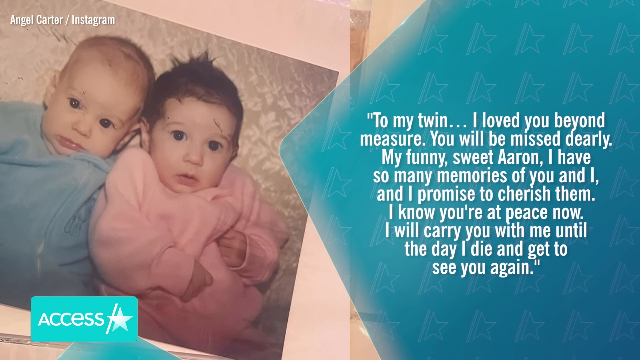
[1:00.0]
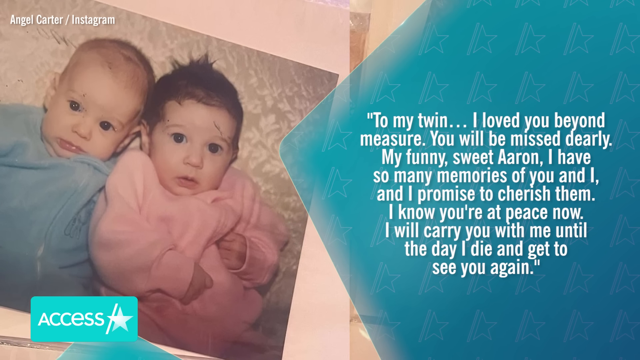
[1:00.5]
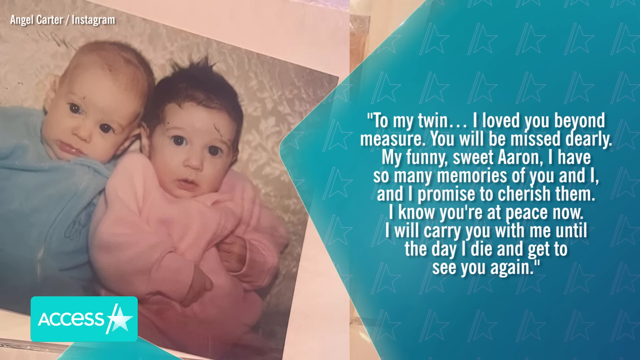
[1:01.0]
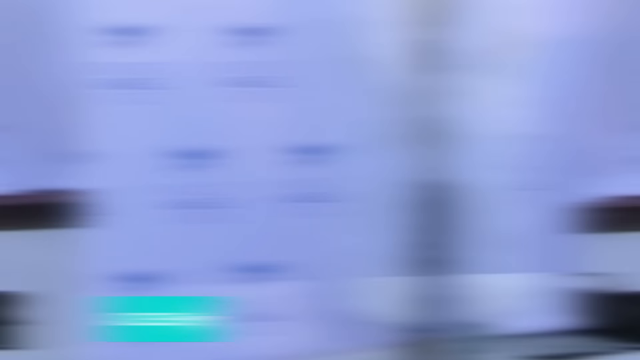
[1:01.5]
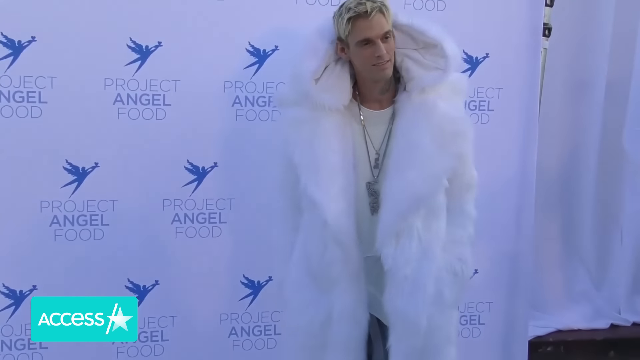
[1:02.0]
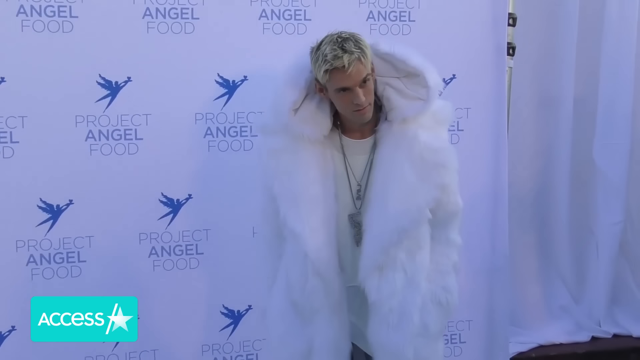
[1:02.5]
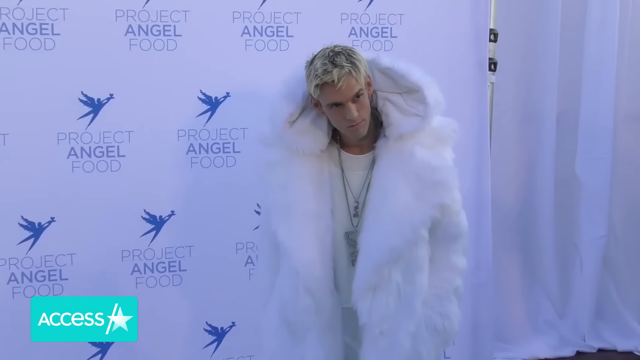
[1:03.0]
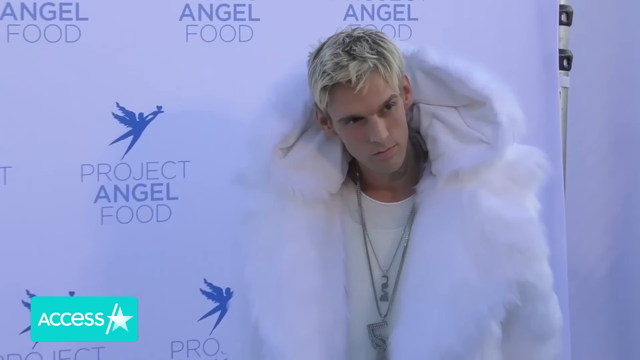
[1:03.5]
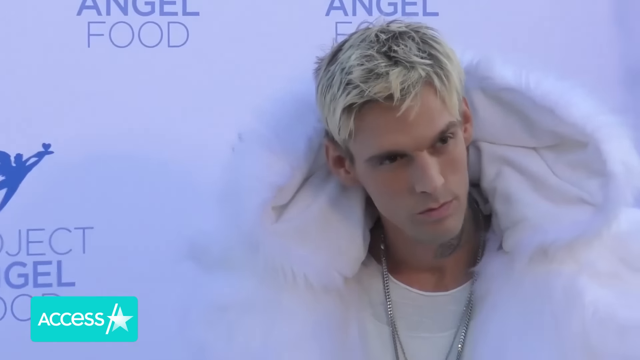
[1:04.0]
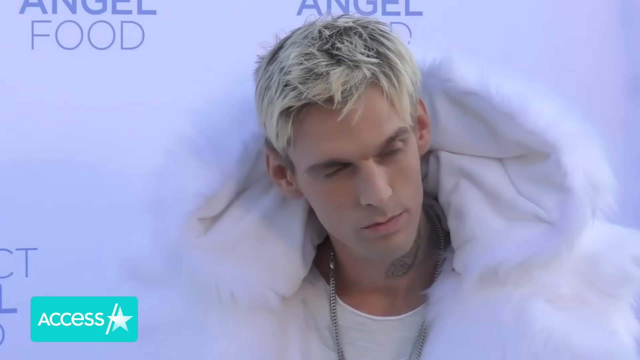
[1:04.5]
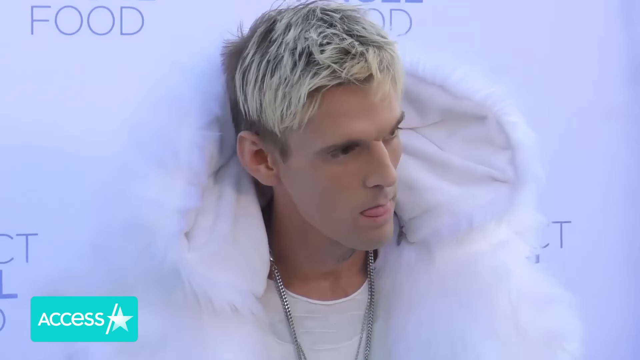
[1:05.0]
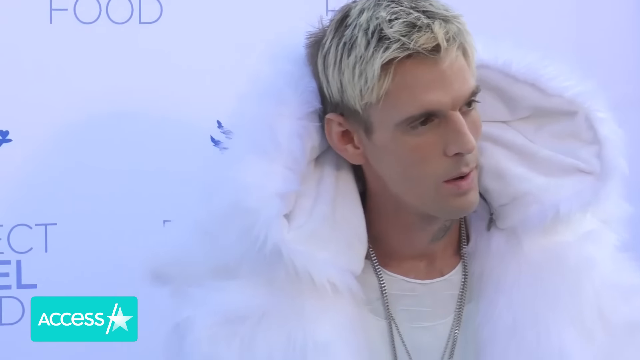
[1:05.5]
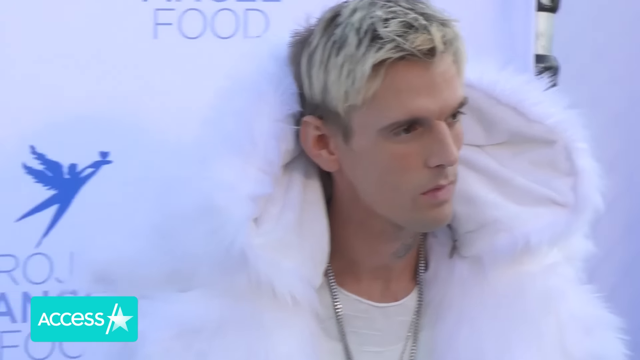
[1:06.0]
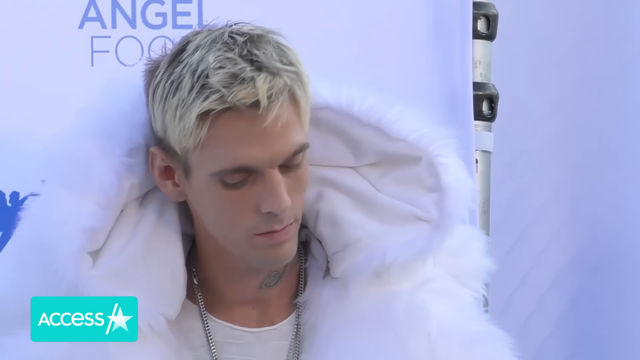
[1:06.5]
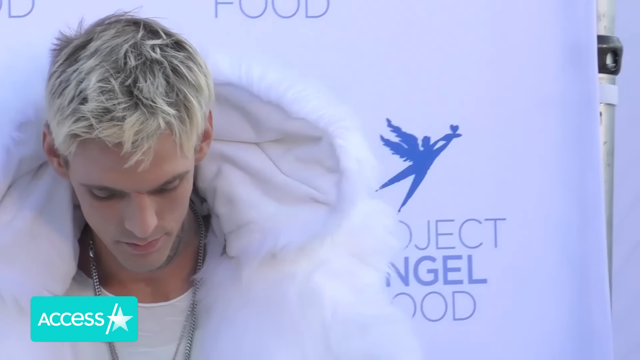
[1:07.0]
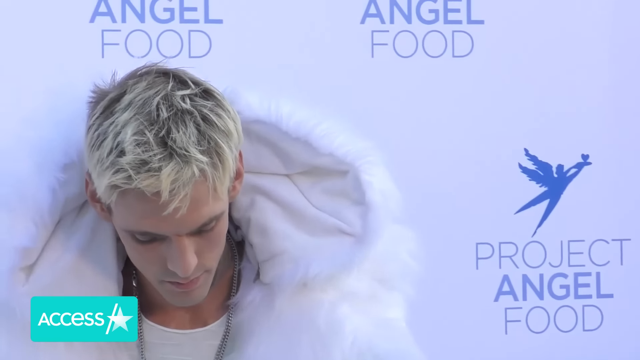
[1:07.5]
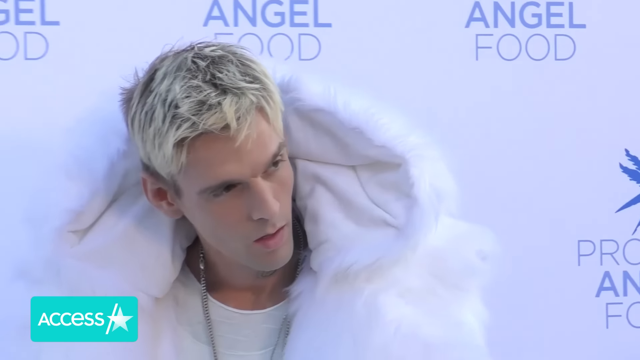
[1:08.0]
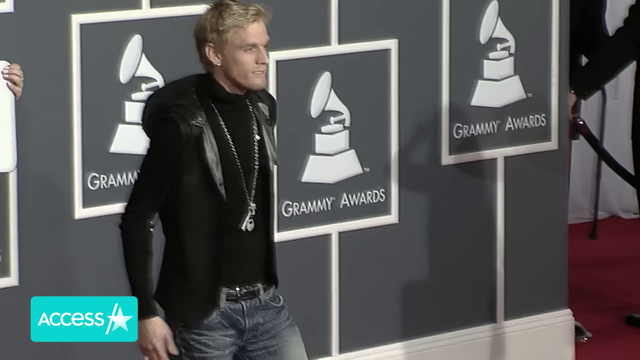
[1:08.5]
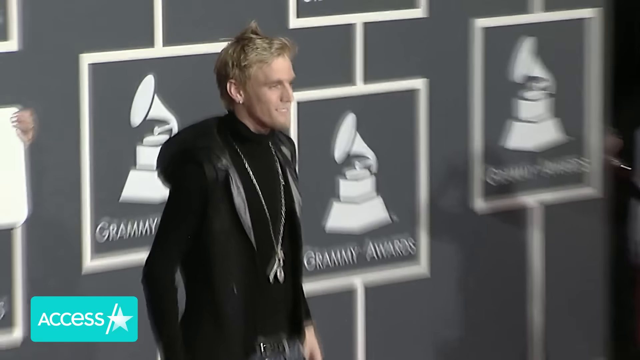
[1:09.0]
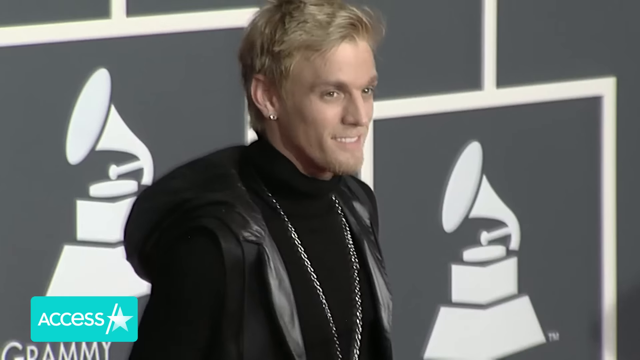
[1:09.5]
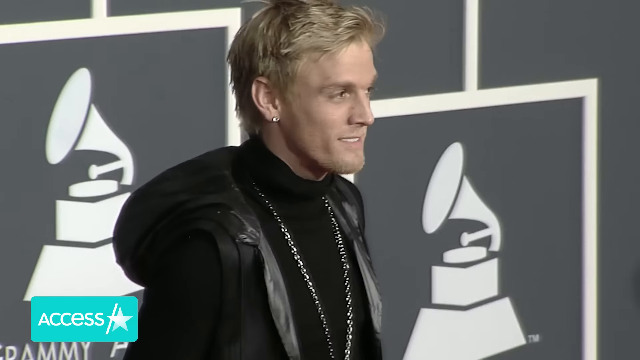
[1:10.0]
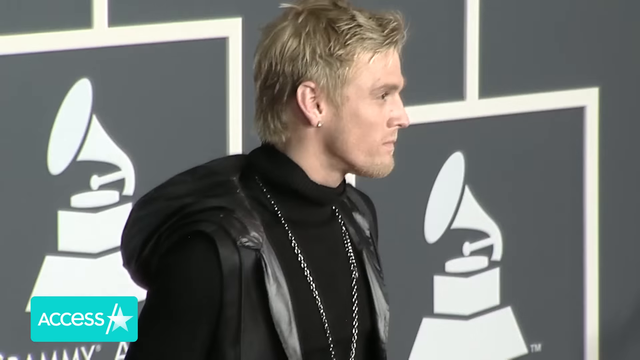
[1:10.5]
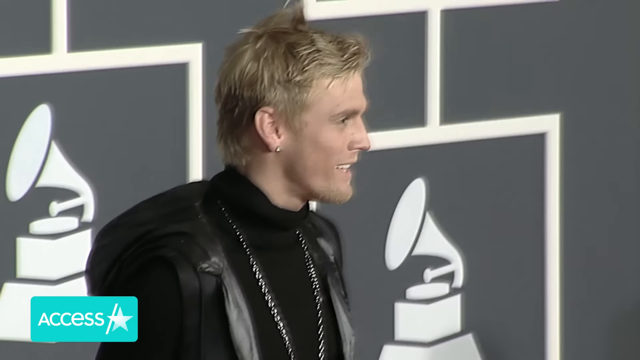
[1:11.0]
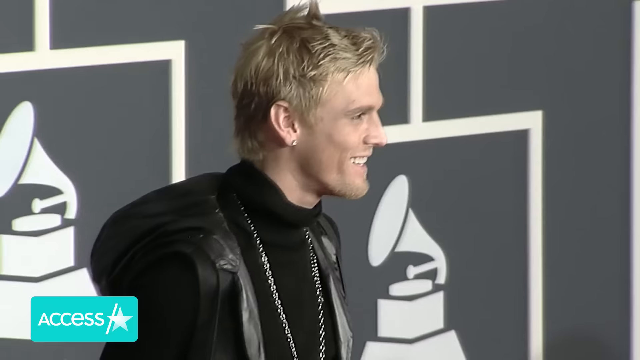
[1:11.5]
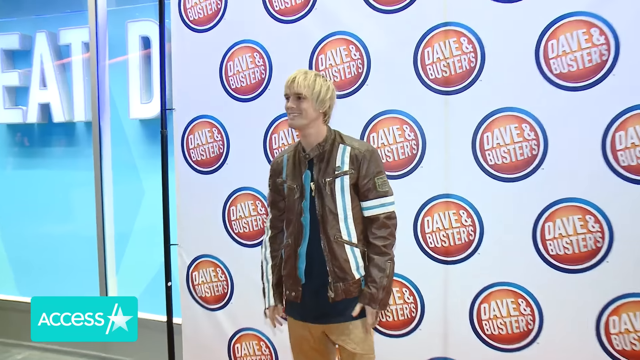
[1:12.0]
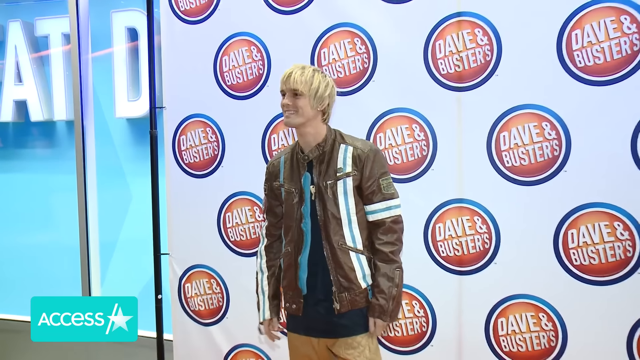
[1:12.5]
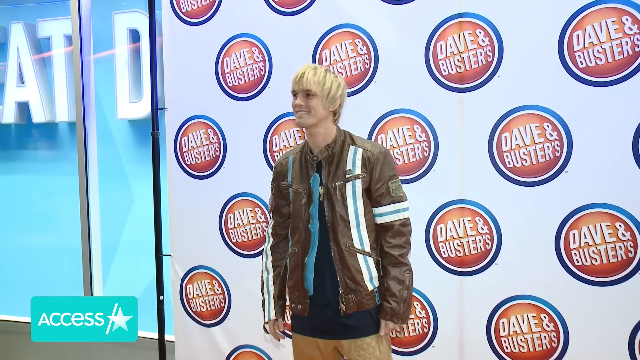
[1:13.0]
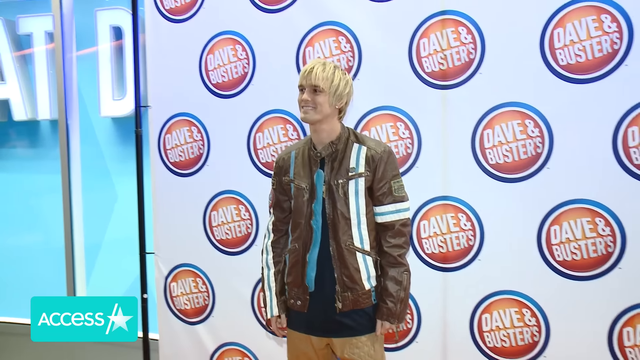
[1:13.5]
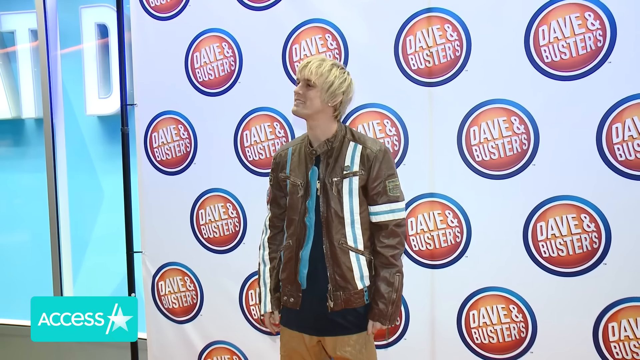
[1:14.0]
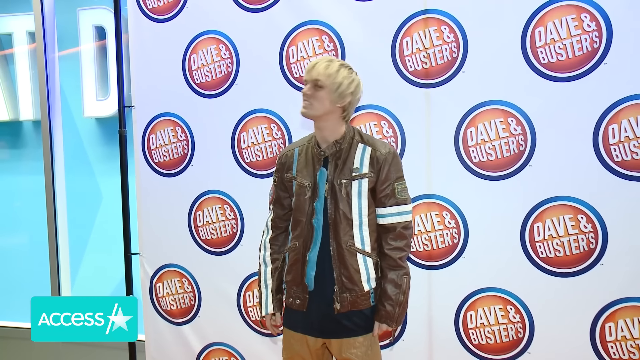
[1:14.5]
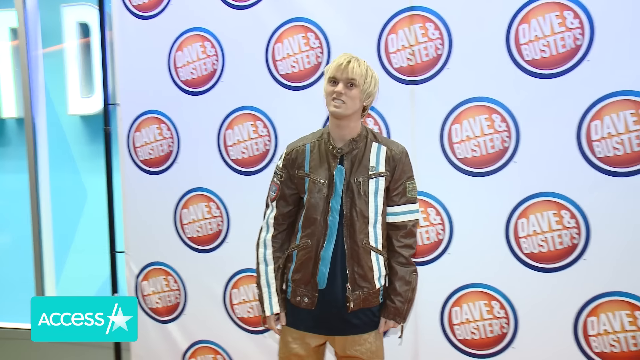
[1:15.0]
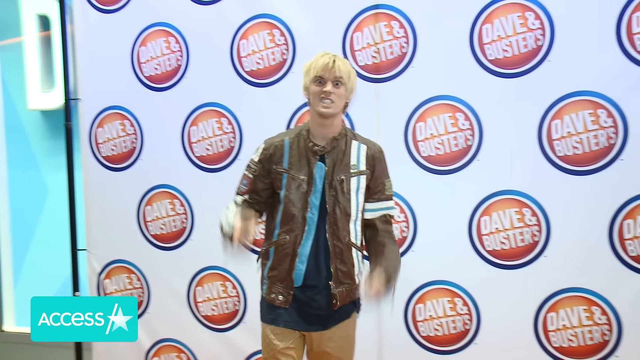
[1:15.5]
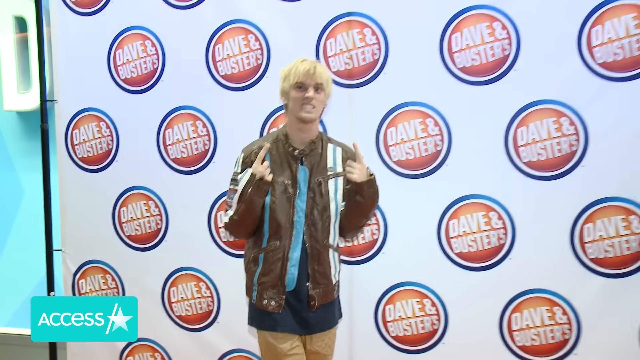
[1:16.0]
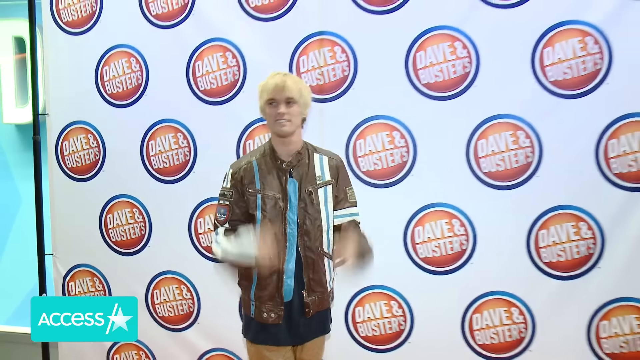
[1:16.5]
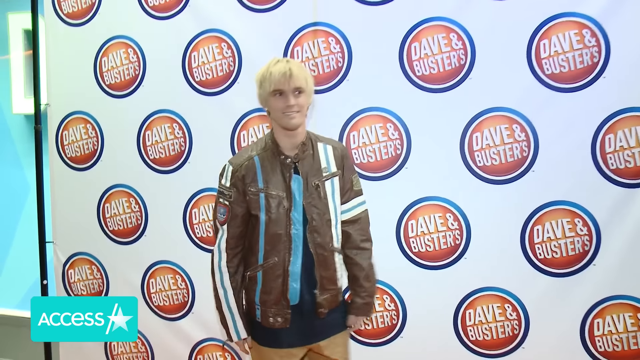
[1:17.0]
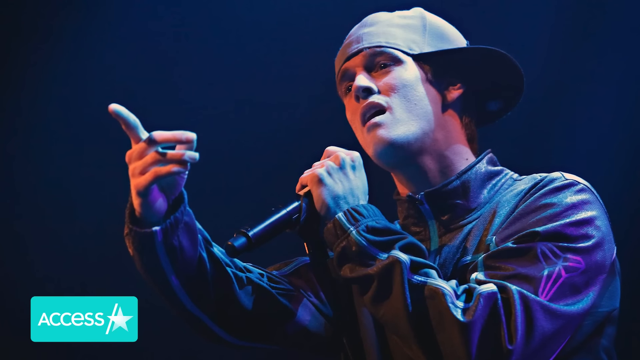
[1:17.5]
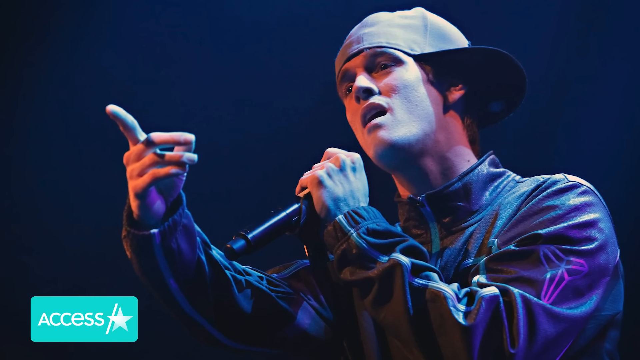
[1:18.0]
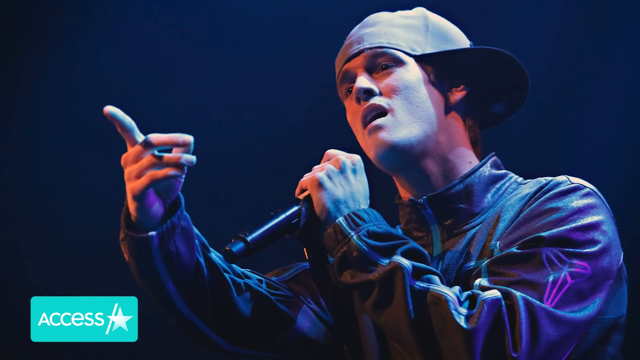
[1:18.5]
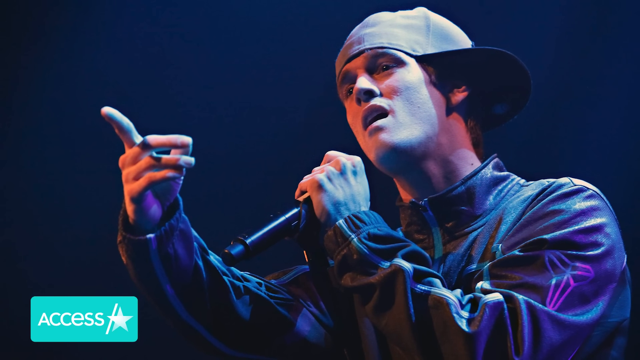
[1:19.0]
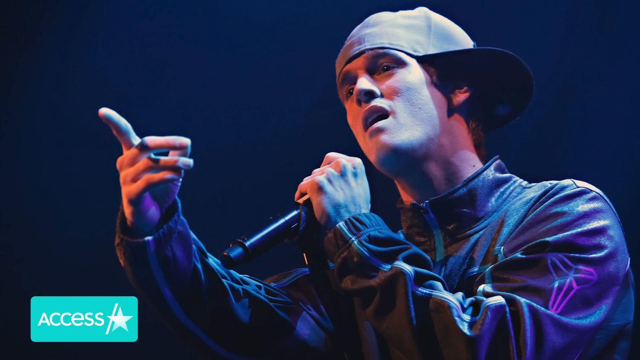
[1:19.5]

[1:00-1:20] The baby picture remains on the left side along with the quote, which reads: "To my twin, I loved you beyond measure. You will be missed dearly, my funny sweet Aaron. I have so many memories of you and I and I promise to cherish them. I know you're at peace now. I will carry you with me until the day I die and get to see you again." The scene shifts to Aaron Carter at an event, dressed all in white: a white shirt, a big white jacket, and two necklaces around his neck. A different video shows him wearing all black with a long silver necklace around his neck; he appears to be at the Grammys, possibly with a picture of the Grammy Awards in the background. Next he wears a brown leather jacket and smiles as pictures are taken of him, in front of a big white wall with multiple Dave and Busters symbols and sponsors on it. Then an image shows him singing at a concert, wearing a hat to the side on his head and holding a microphone.